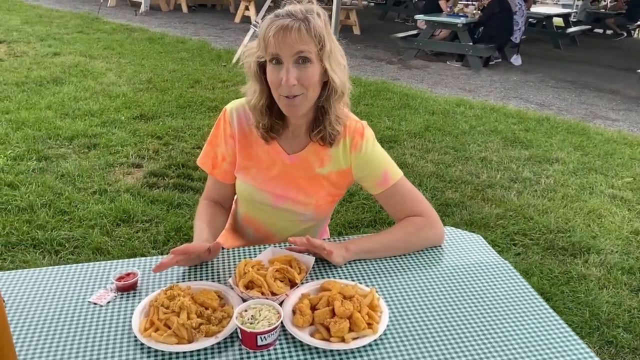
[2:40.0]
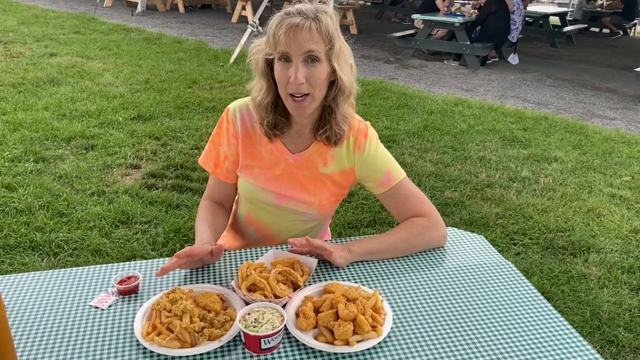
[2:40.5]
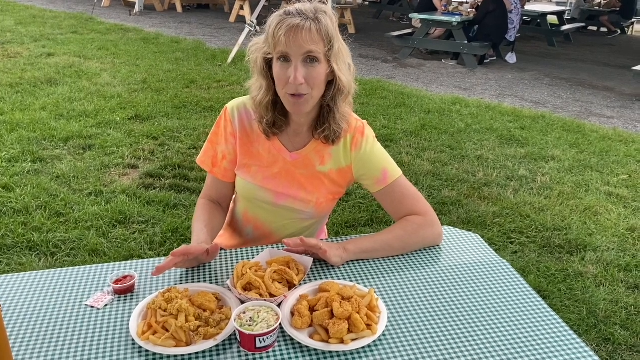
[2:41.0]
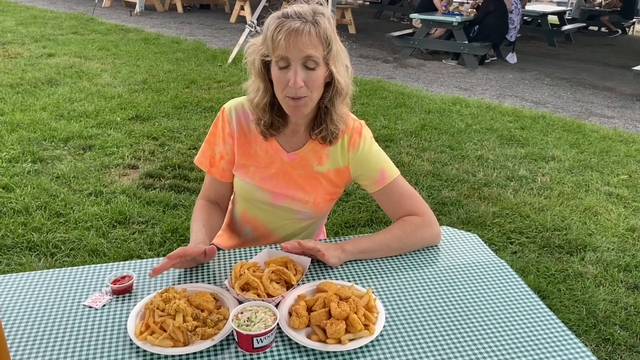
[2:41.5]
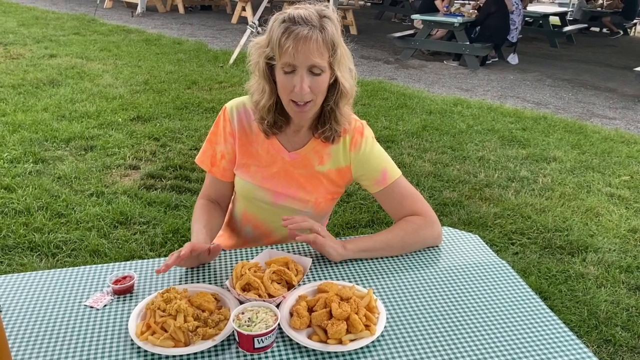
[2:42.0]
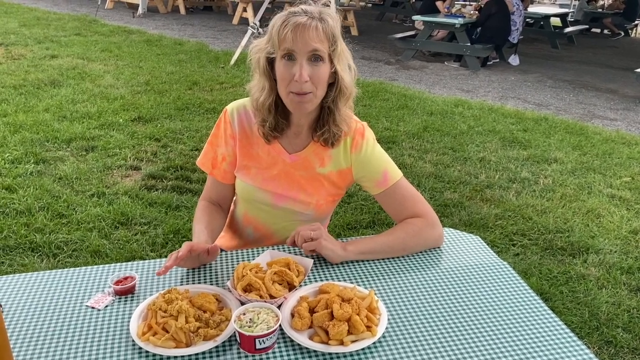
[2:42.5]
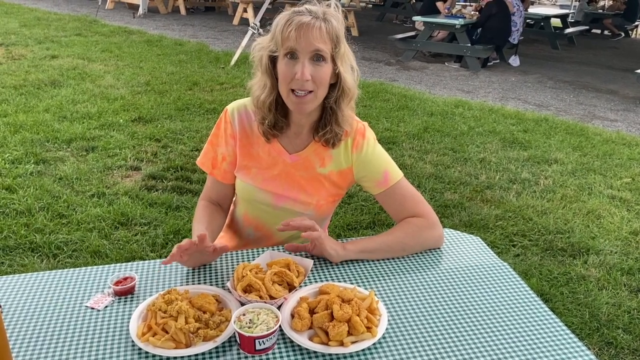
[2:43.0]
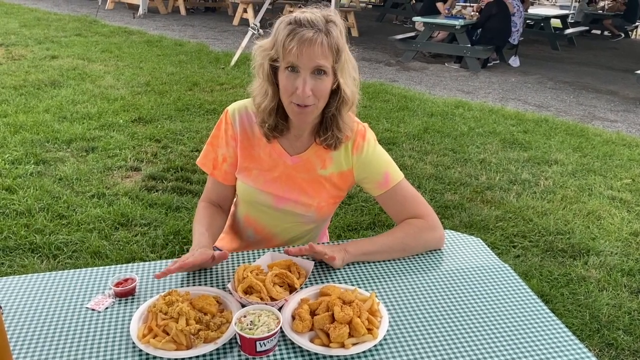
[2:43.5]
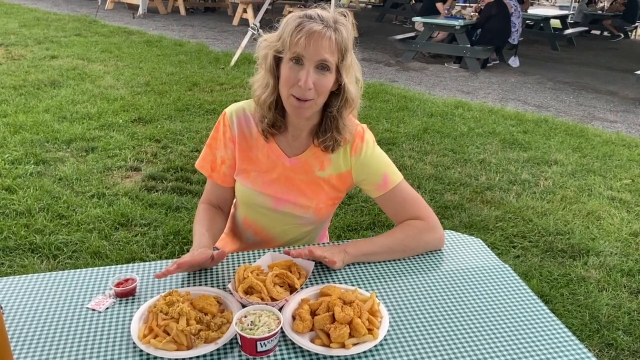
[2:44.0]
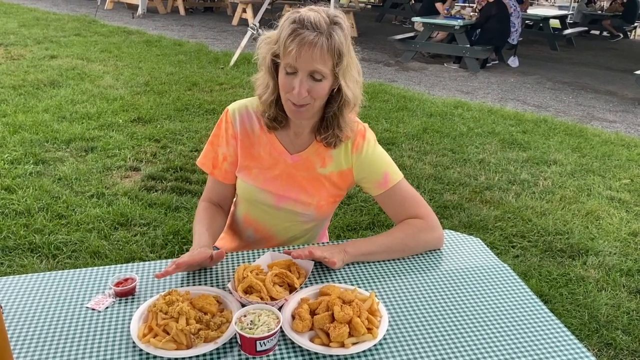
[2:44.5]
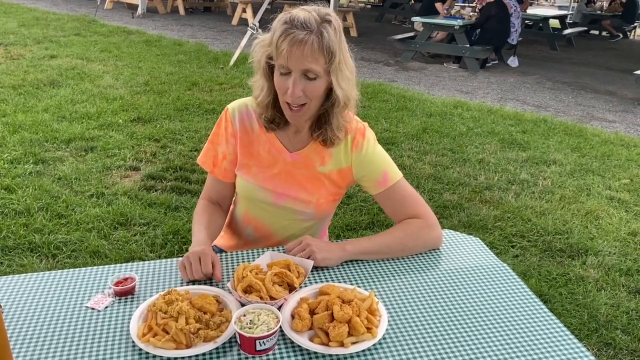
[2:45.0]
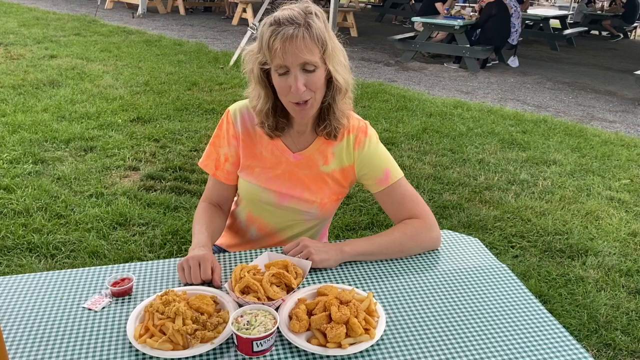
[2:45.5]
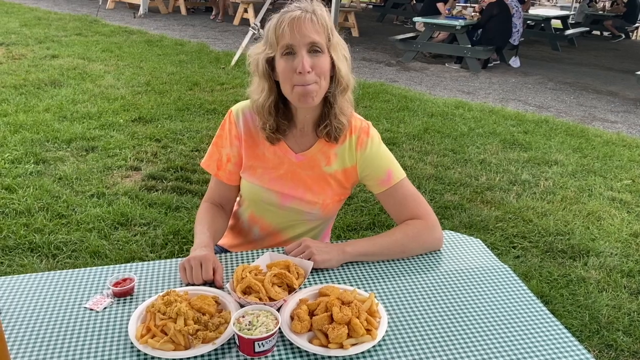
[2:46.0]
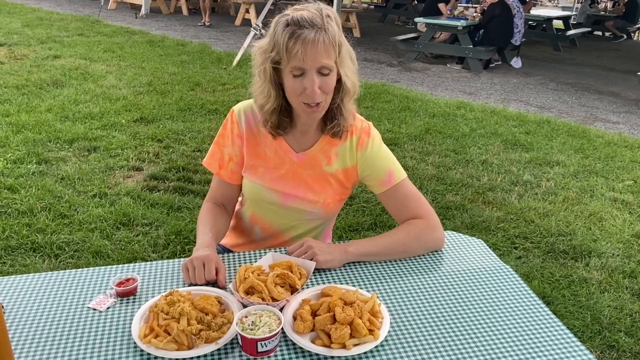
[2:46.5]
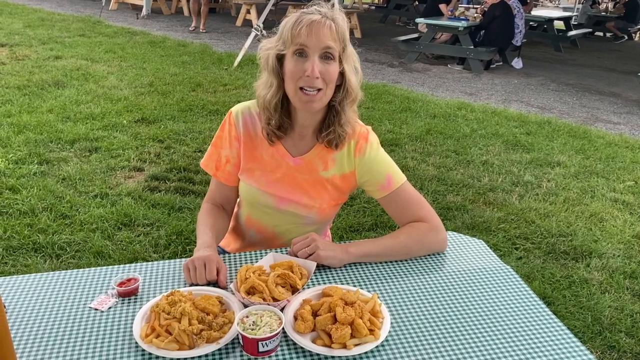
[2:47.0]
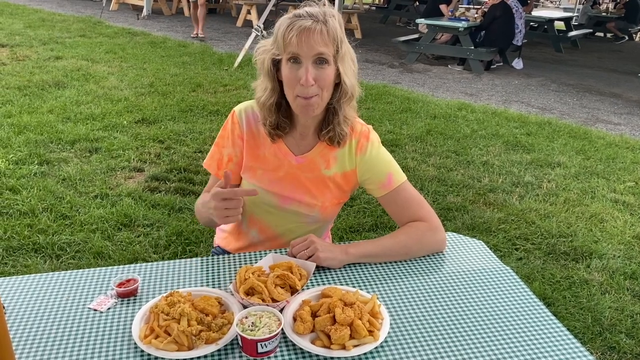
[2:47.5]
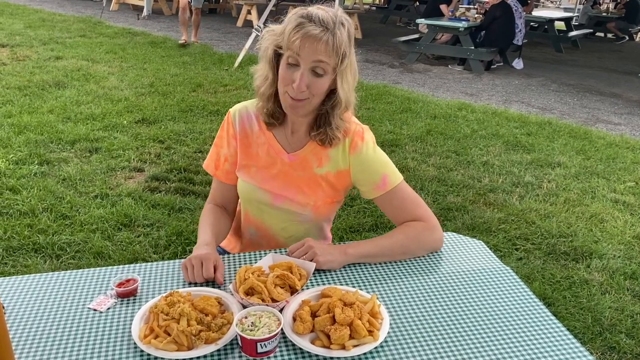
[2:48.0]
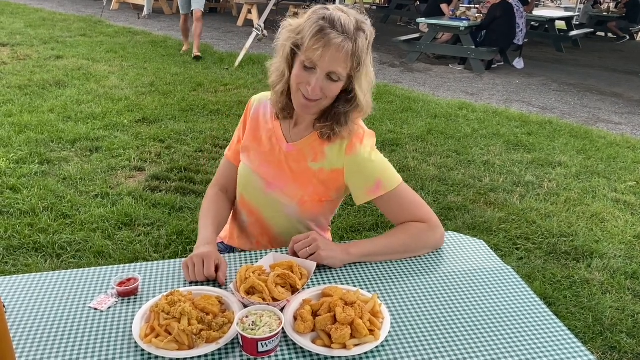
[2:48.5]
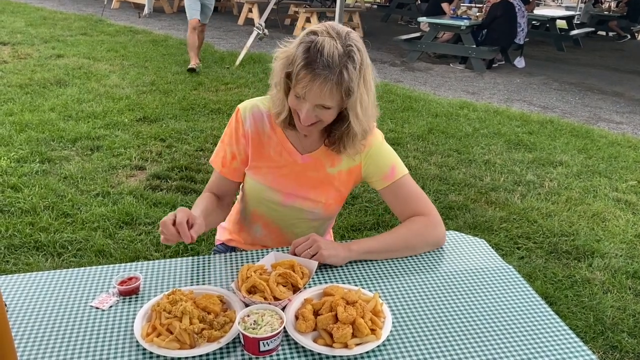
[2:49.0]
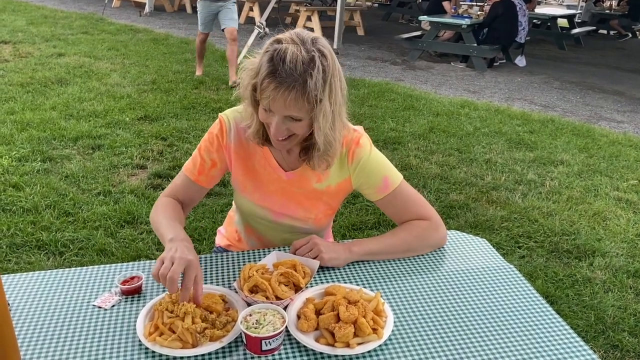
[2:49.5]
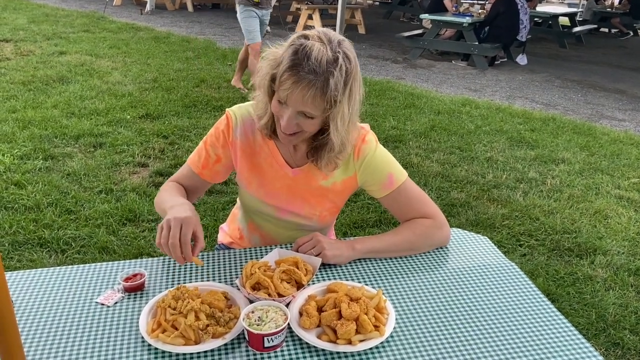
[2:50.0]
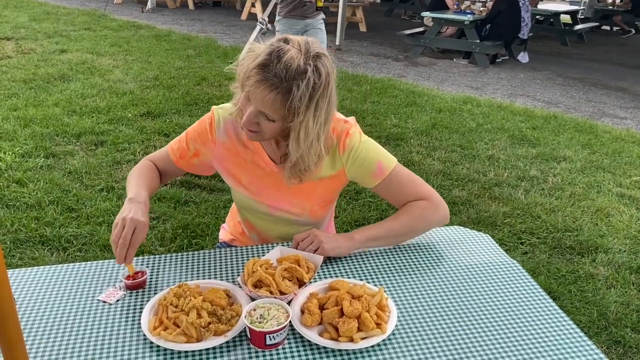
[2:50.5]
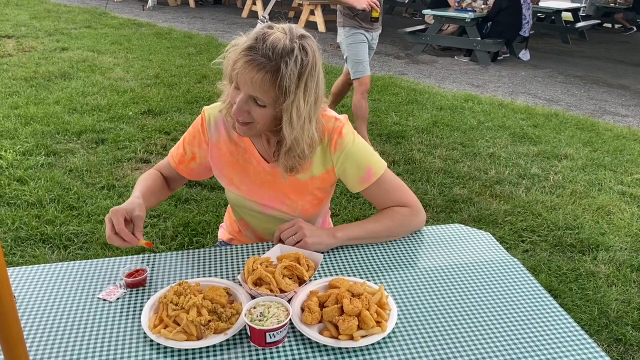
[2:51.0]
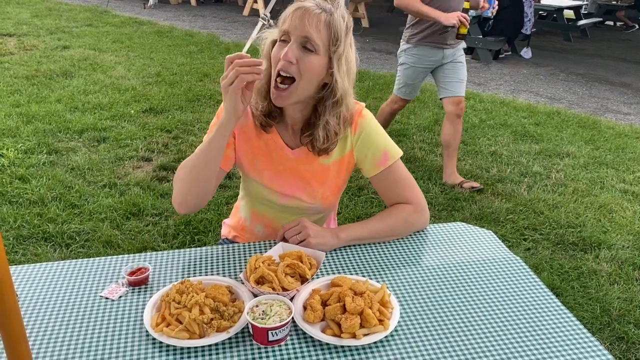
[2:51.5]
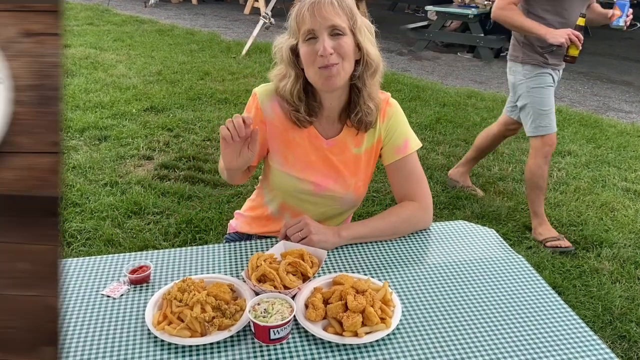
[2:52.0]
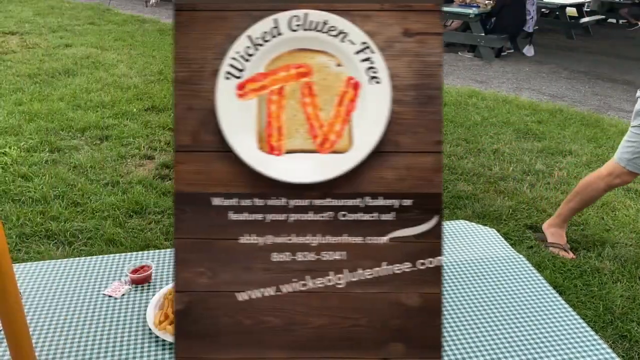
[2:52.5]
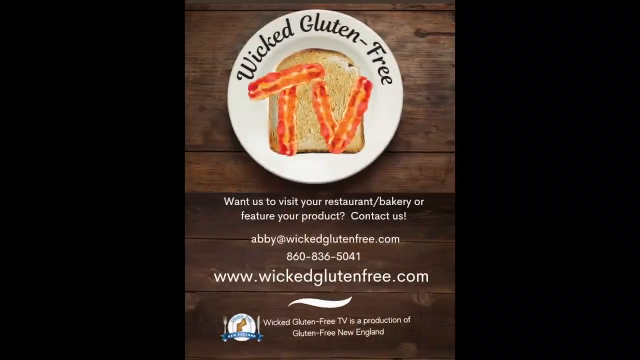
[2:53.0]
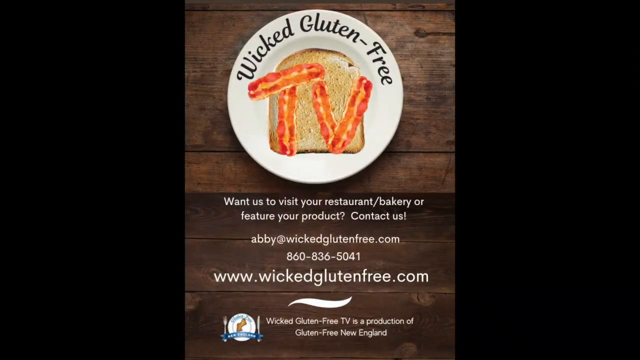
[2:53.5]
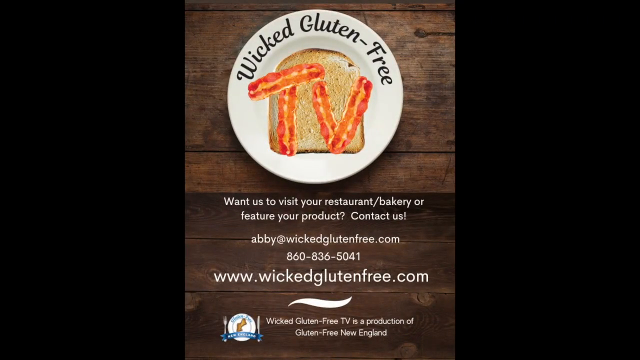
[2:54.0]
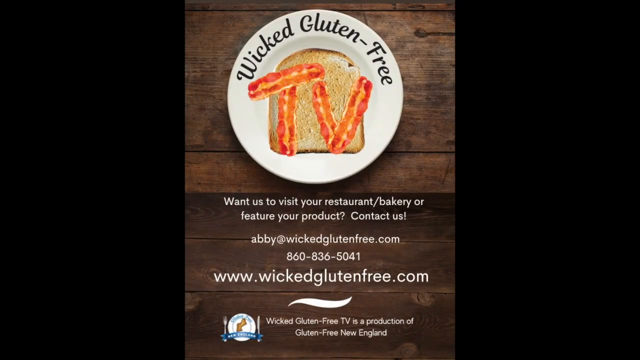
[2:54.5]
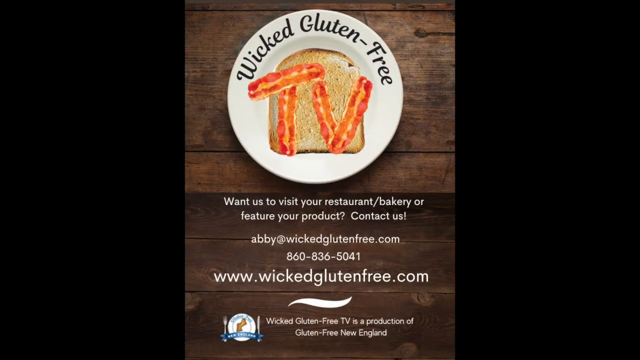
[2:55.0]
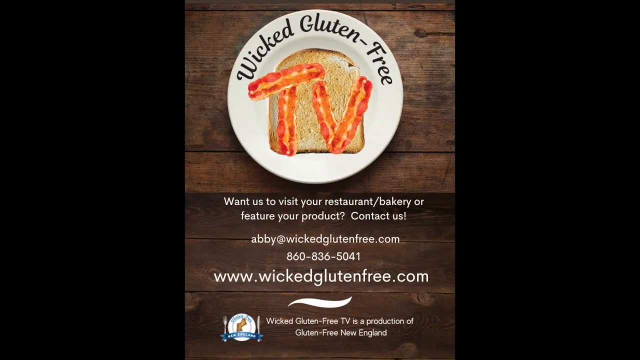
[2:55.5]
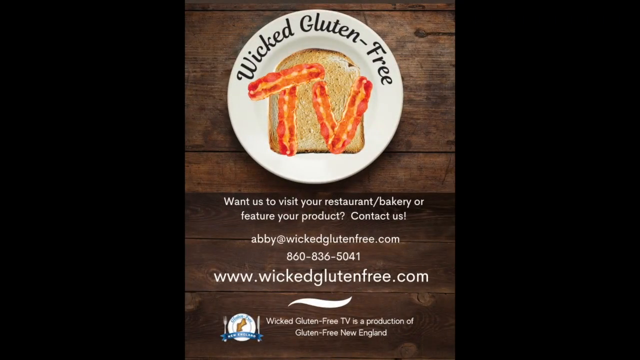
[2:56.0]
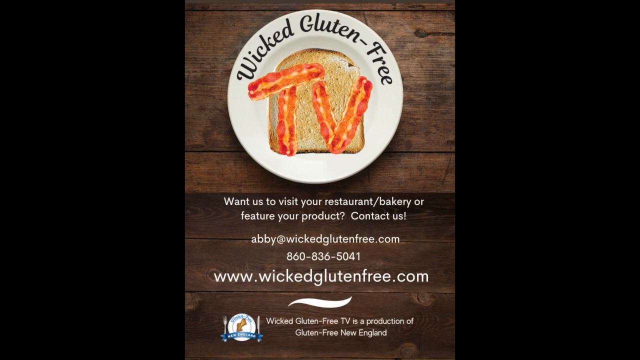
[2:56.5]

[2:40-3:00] The woman from the start of the video sits at the table with the green gingham tablecloth and the three plates of fried food in front of her, talking to the camera. She nods her head and smiles as she talks, looking happy, then takes a chip, dips it in ketchup and eats it. A Wicked Gluten-Free TV title screen follows: a vertical picture showing a logo of the white plate with toast in the middle and "TV" written on top in streaky bacon, and "Wicked Gluten-Free" in black at the top around the edge of the plate. Underneath, white letters say "want us to visit your restaurant / bakery or feature your product, contact us". The next line says "Abbey at Wicked Gluten-Free" and gives a phone number and a website. There is a small white flourish and the symbol again: a knife and fork next to a plate with a banner on it, whose text cannot really be read, with more small white writing underneath. The background looks like a table. The video ends on a black screen for the last few seconds.